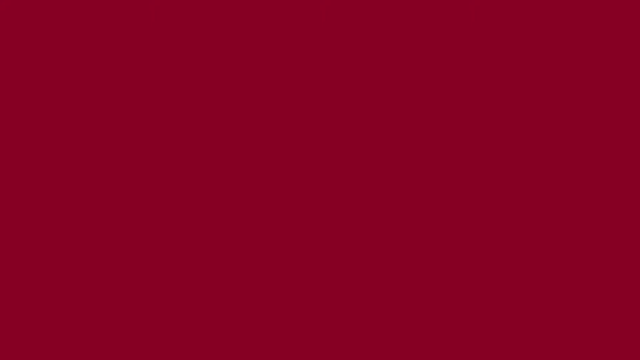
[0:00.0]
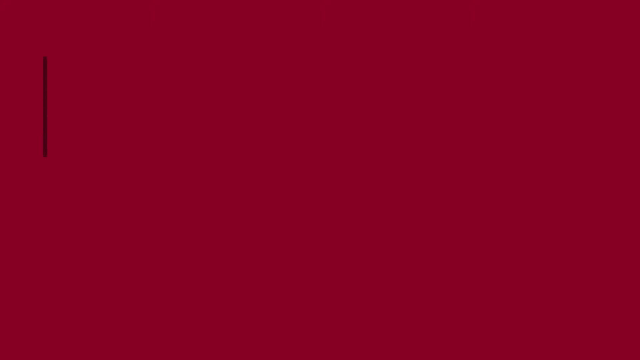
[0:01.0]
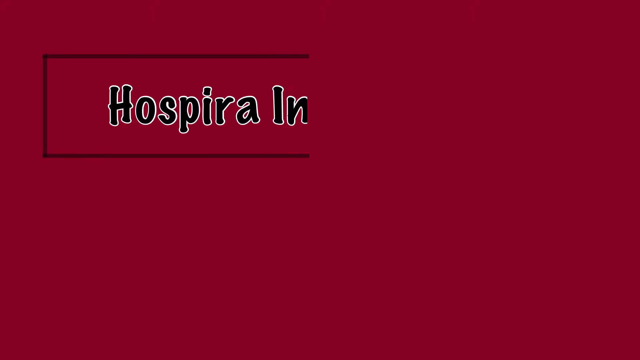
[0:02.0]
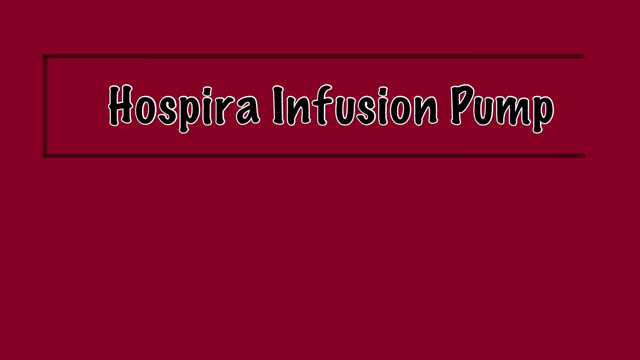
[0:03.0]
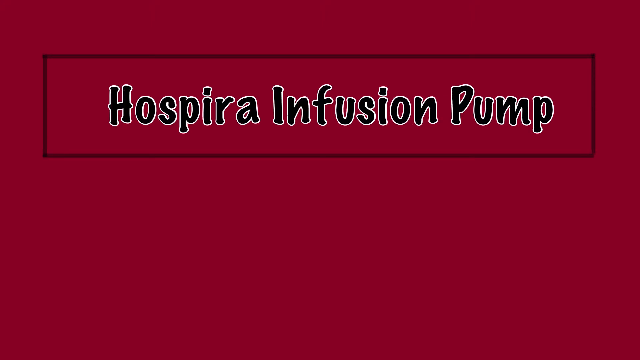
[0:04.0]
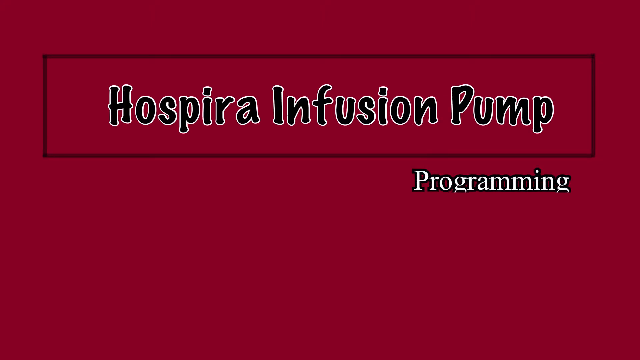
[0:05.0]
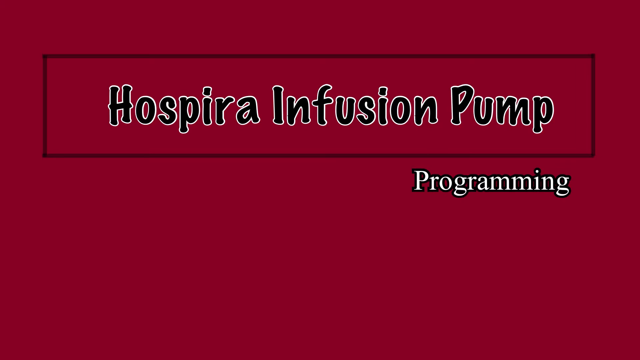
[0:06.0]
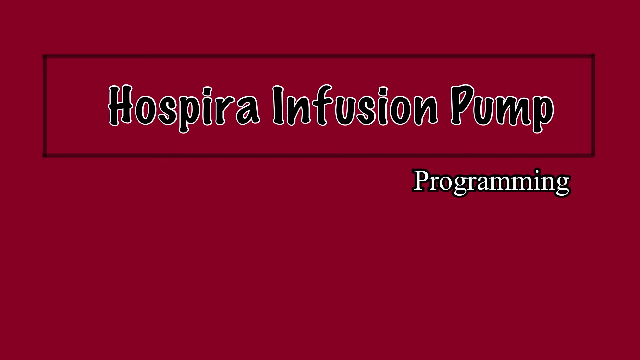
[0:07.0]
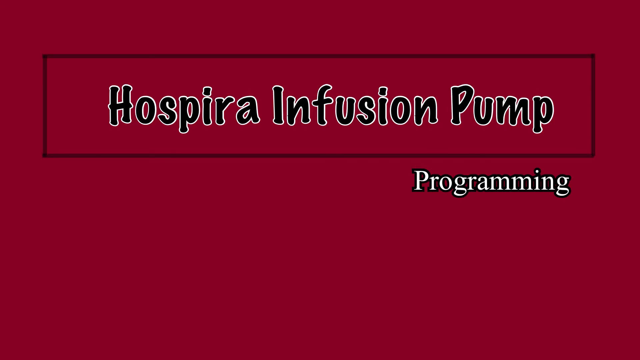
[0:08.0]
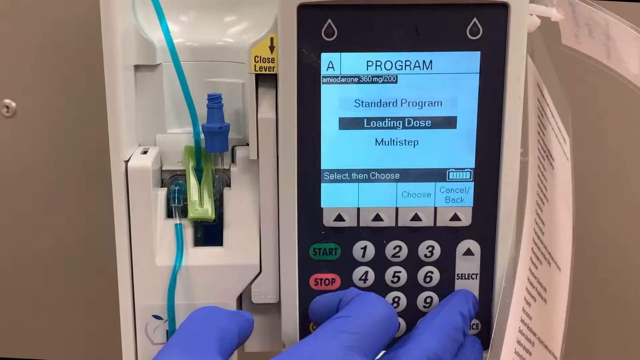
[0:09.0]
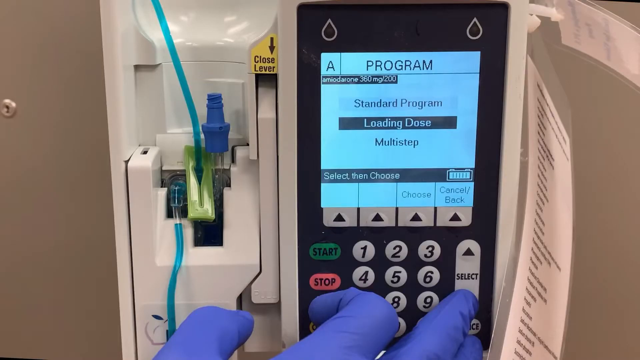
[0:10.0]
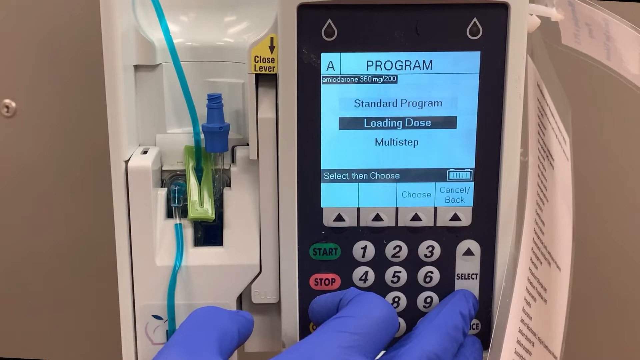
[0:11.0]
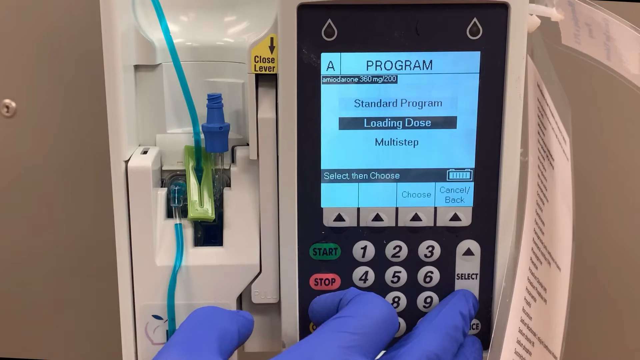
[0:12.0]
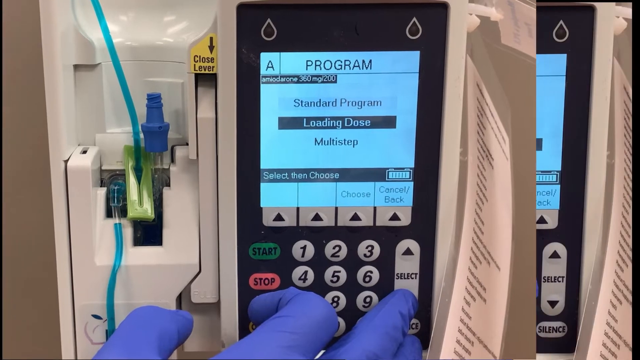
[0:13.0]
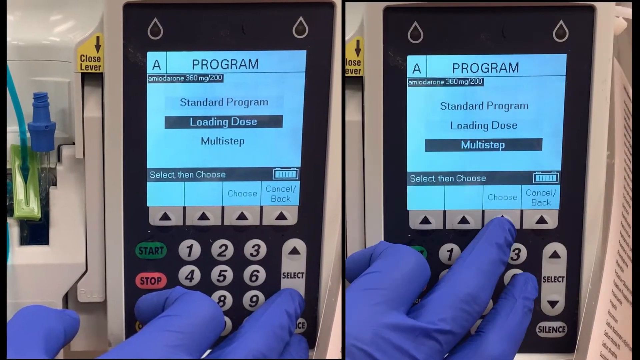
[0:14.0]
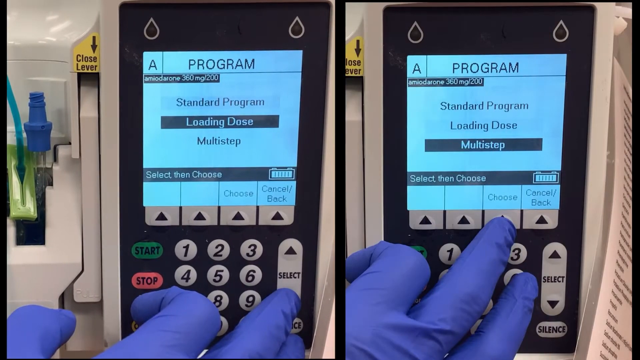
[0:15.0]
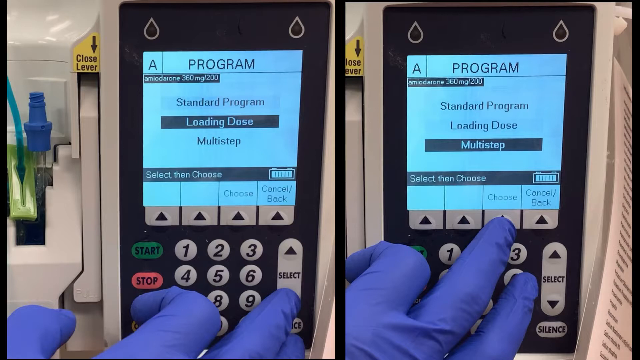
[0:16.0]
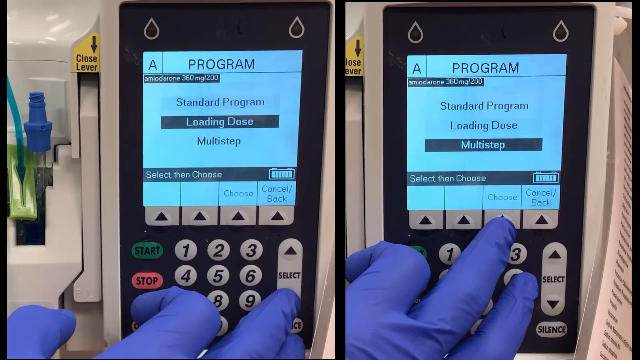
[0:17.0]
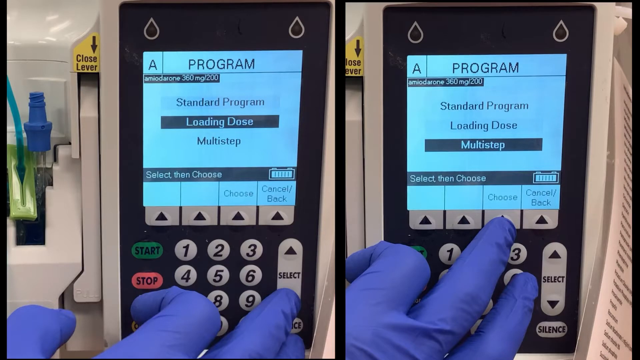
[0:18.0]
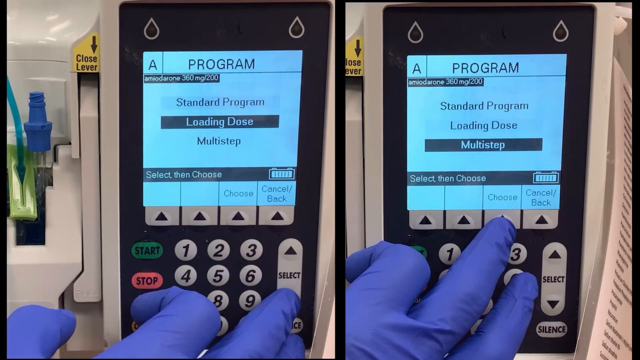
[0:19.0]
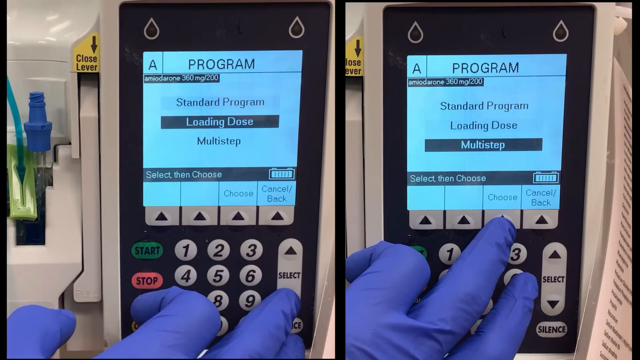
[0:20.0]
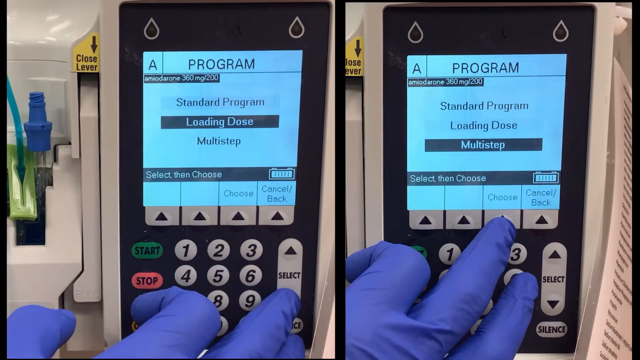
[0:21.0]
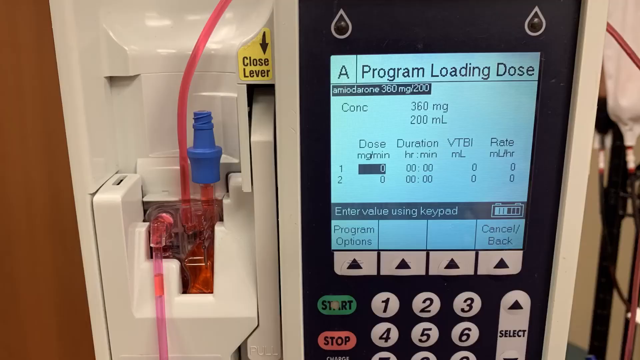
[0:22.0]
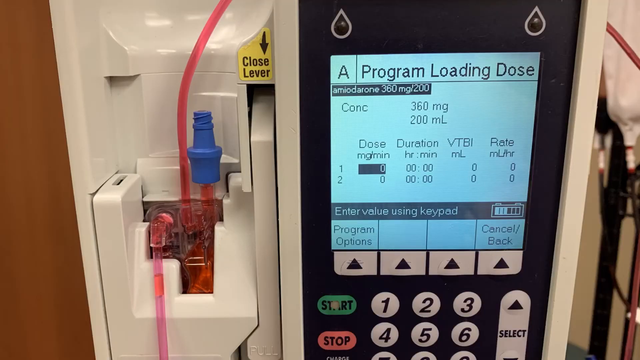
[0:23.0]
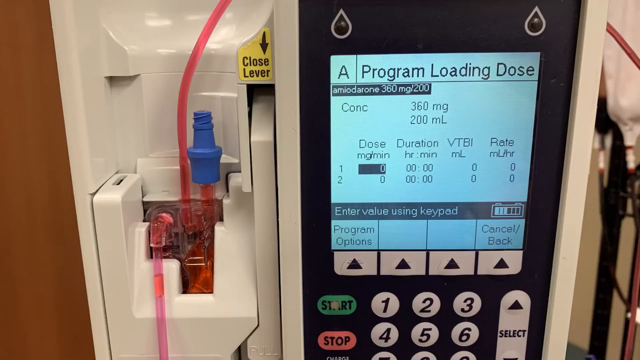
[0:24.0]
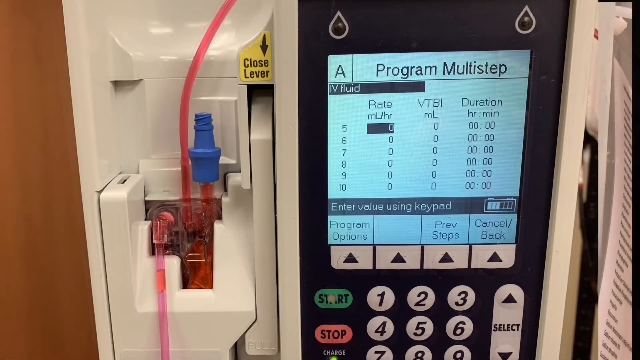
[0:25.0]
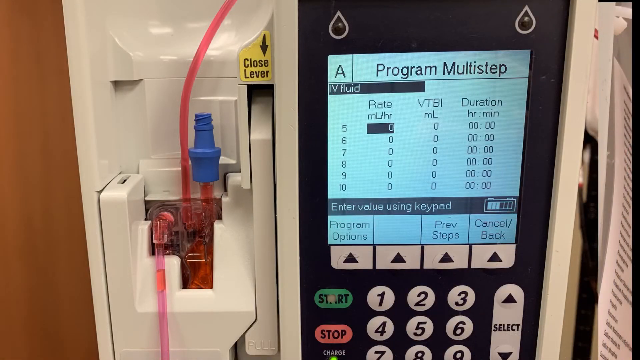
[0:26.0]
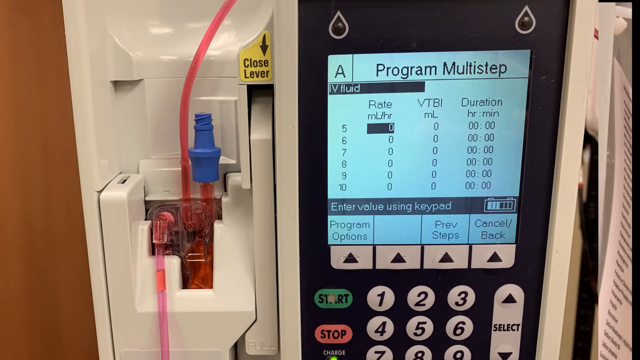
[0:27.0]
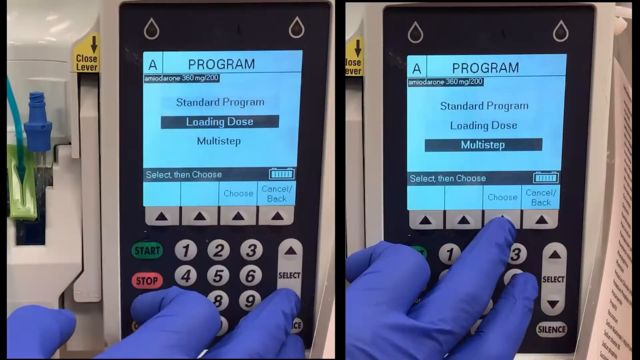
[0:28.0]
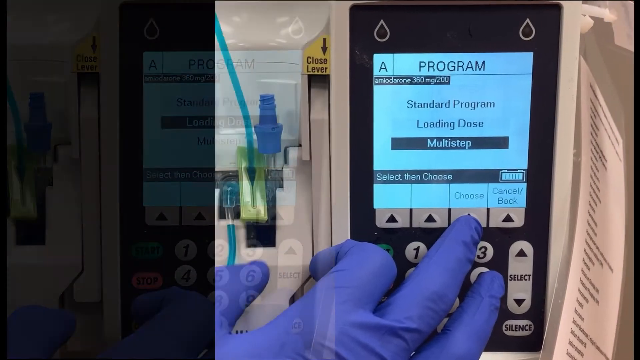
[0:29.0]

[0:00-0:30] The video demonstrates how to program a Hospira infusion pump. It opens by showing multiple menus available for programming: a programming menu for loading dose and a programming menu for multi-step. A medical professional is set to demonstrate programming, apparently starting with the multi-step programming, which allows selection of multiple rates per hour and the duration of each rate. Multiple setups appear to be shown: in one image a blue solution appears to be fed through the tubing, and in another a red solution is fed through the tubing, with the programming process apparently the same regardless of the drug used.